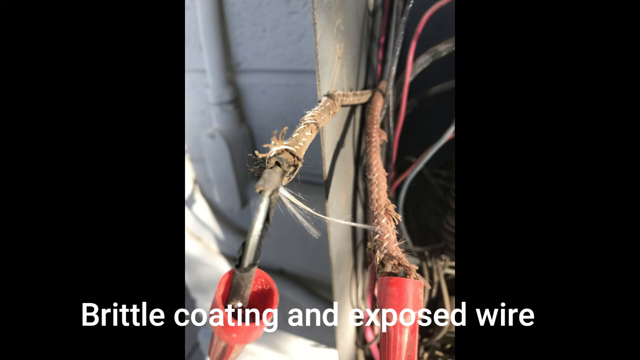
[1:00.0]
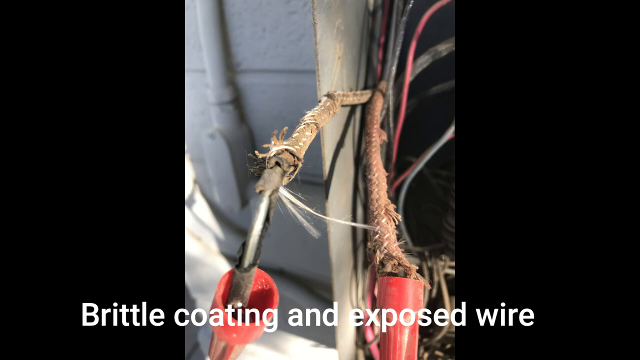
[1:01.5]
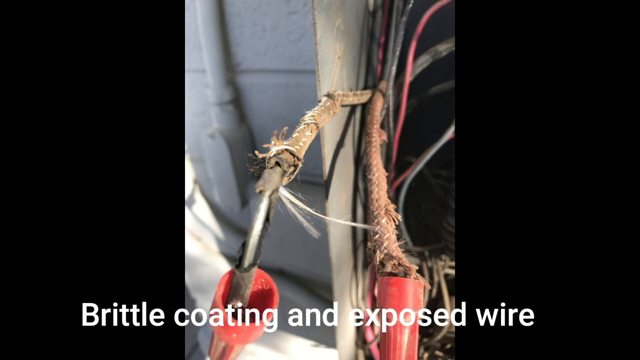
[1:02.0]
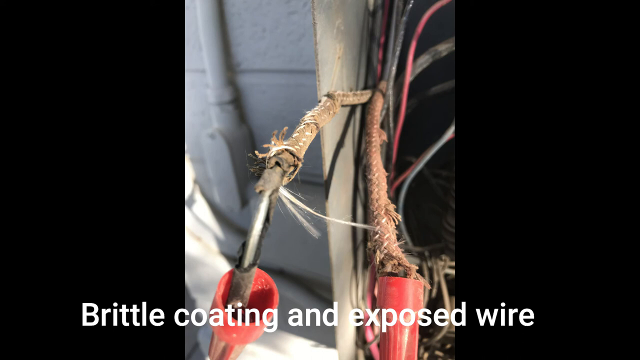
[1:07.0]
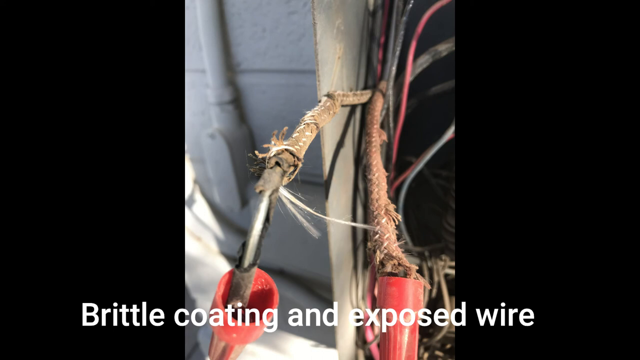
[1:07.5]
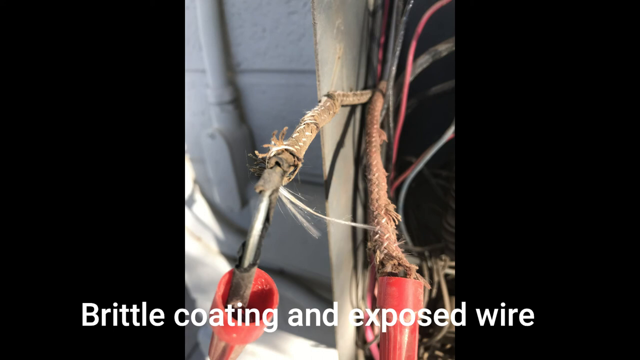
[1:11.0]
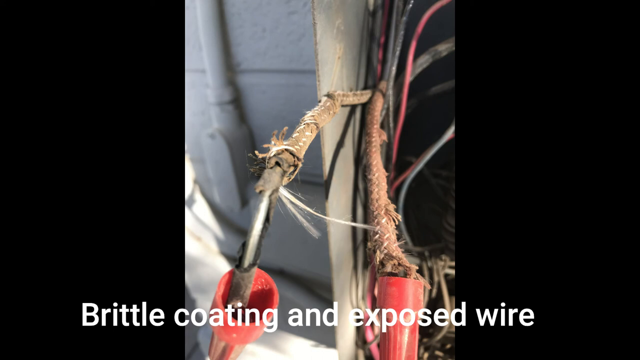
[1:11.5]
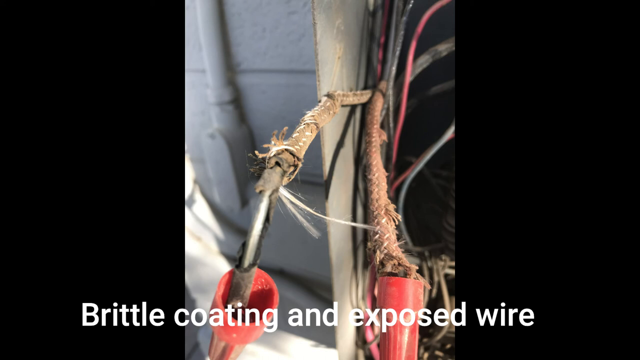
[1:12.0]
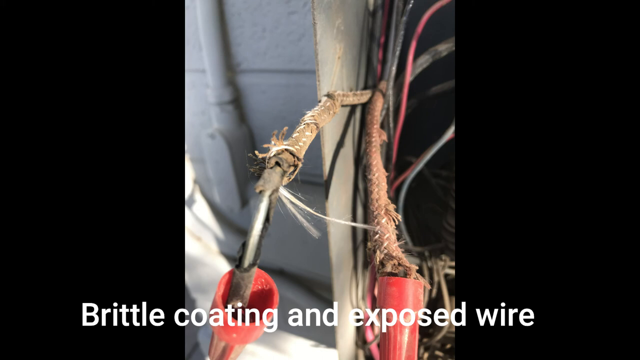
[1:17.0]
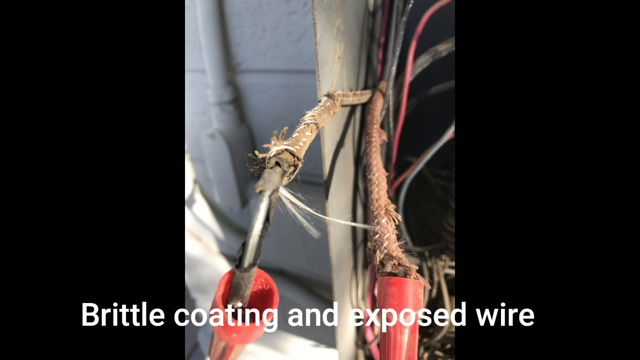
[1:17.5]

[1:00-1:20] Exposed wires are covered in a brown mesh cover with some rubber underneath it. In this picture one wire is completely exposed, showing white strands where the covering has pretty much been torn off. A caption reads "brittle coating and exposed wires." There is a red cap that kind of helps keep the wires covered, but it looks like it has failed, leaving the wire completely exposed. The wires look like they are on the side of a building, probably a brick building, maybe a manufacturer, and may be connected to an AC unit, heating unit or some other type of machine. Other wires are in the background; not all of them are exposed, but one is completely exposed.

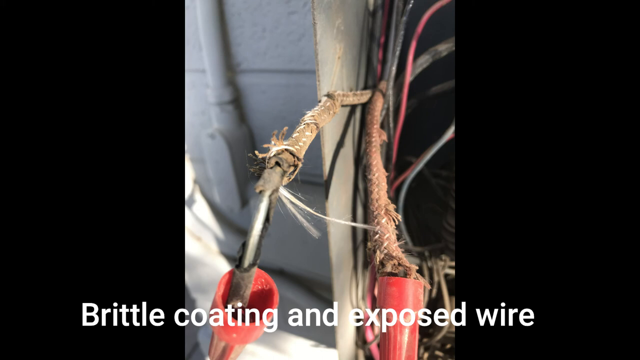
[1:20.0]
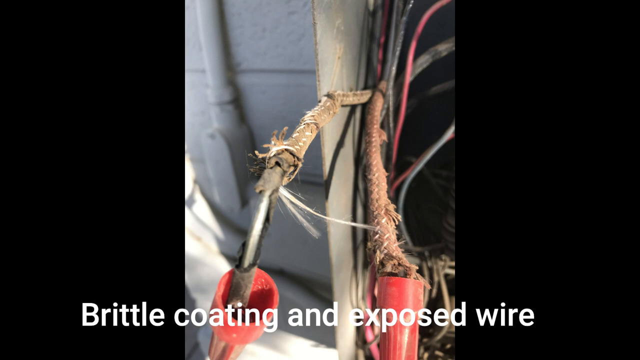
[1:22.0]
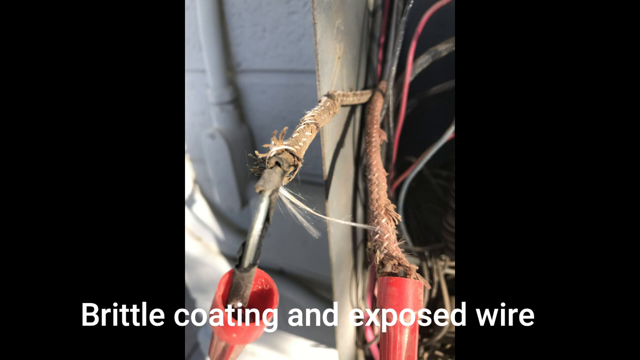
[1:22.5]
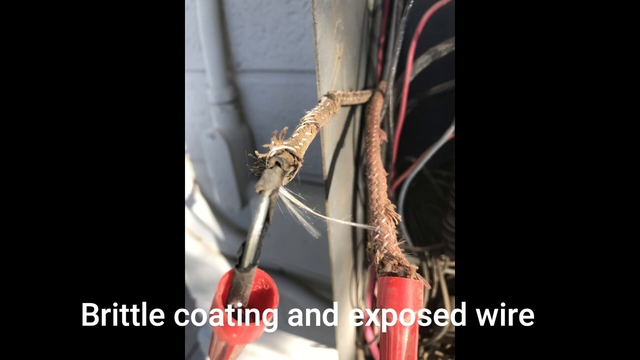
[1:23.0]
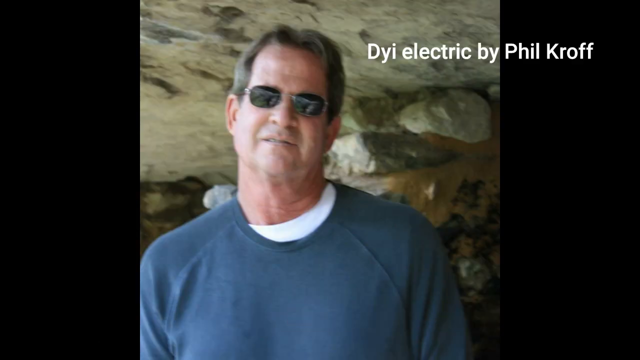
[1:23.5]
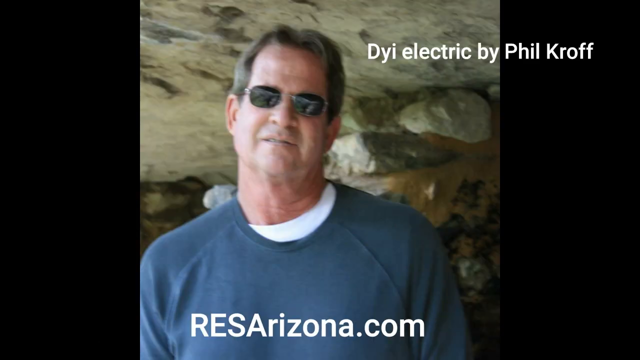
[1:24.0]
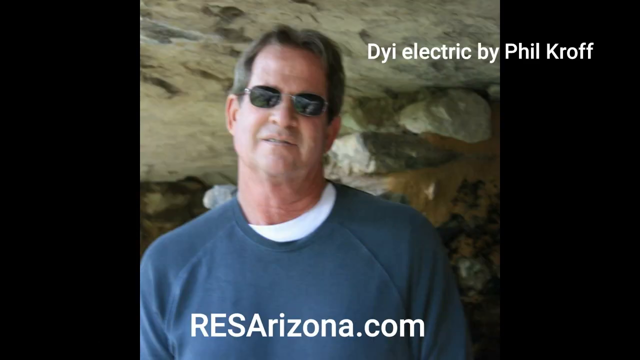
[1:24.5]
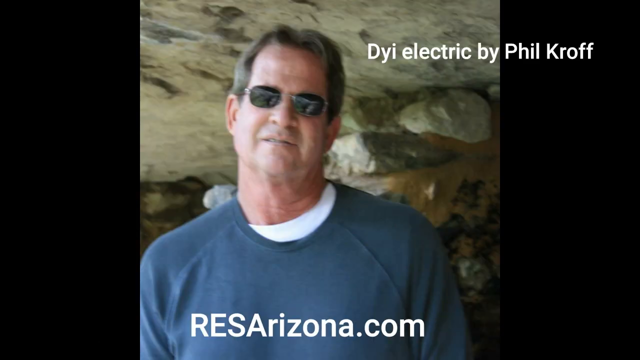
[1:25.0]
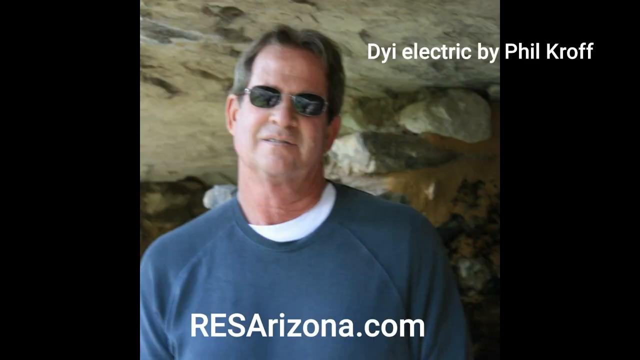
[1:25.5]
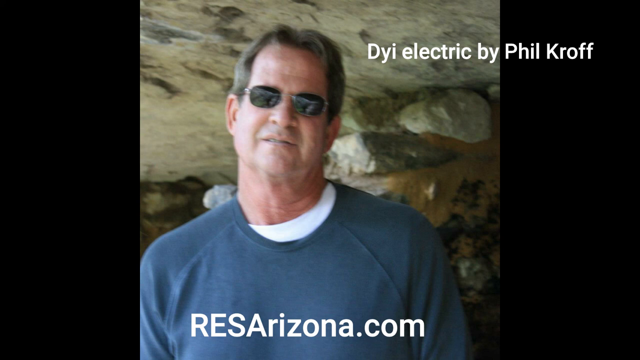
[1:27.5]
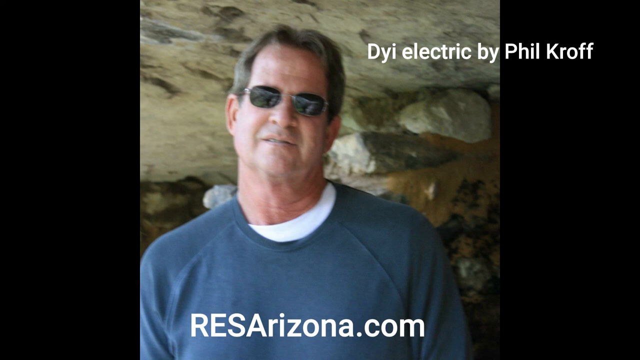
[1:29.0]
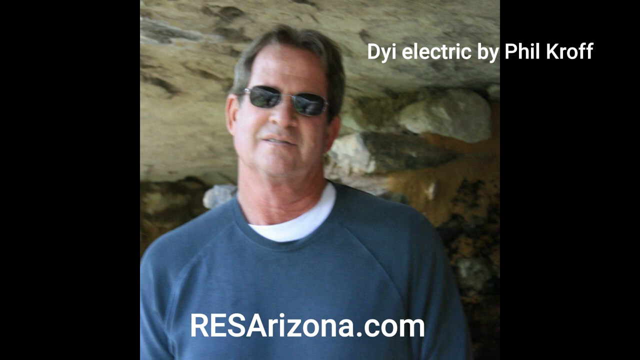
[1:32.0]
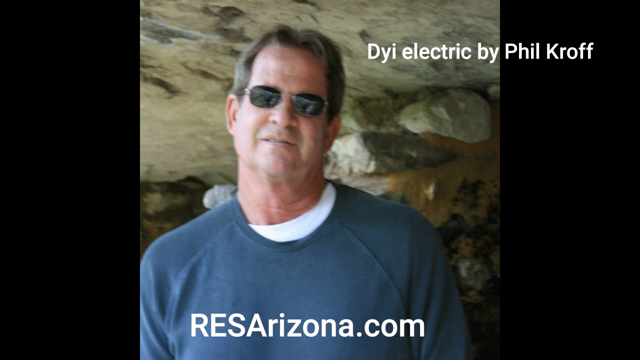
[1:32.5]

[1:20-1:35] A picture of some exposed wires appears with a caption reading "brittle coating and exposed wire." One wire is covered by what looks like a brown mesh and also by rubber plastic, but the rubber is completely gone, showing the mesh and leaving the wire completely exposed. There is what looks like a red tube that seems to have failed as well, showing kind of white pieces of strand. Next comes a picture of a Caucasian man with a caption reading "gyi electric by phil carf." He looks like he is standing in front of a cave, wearing black sunglasses, a blue long-sleeved sweater and a white undershirt, and is kind of just looking into the camera. The video stays on his image for a little while.